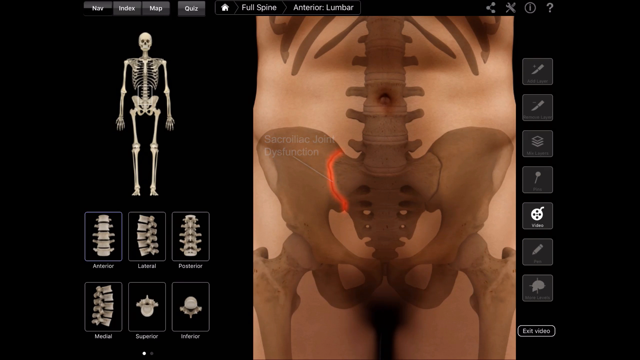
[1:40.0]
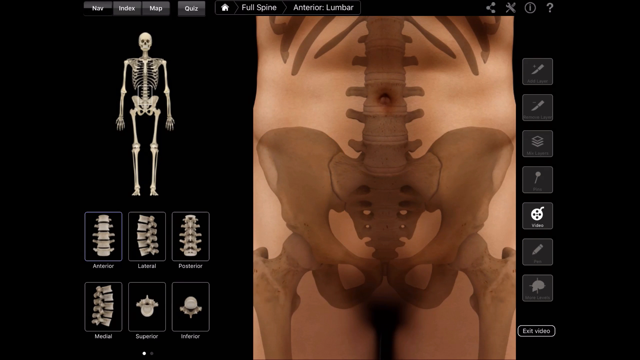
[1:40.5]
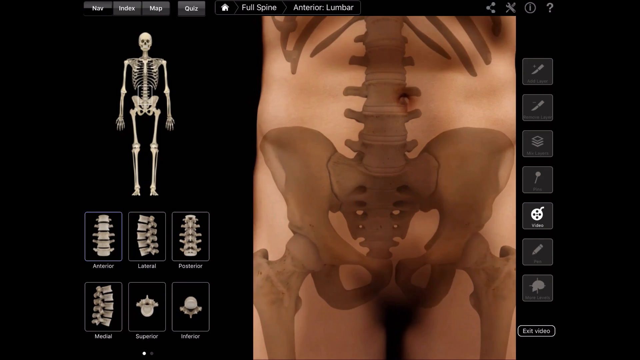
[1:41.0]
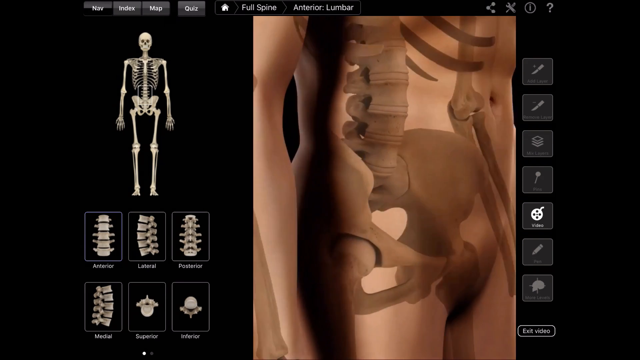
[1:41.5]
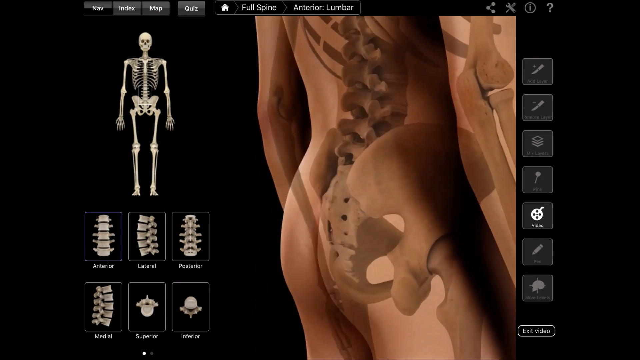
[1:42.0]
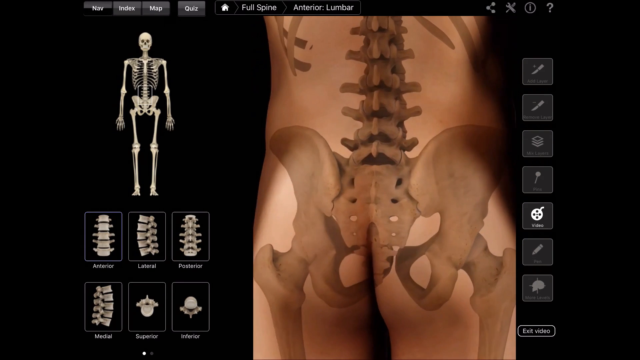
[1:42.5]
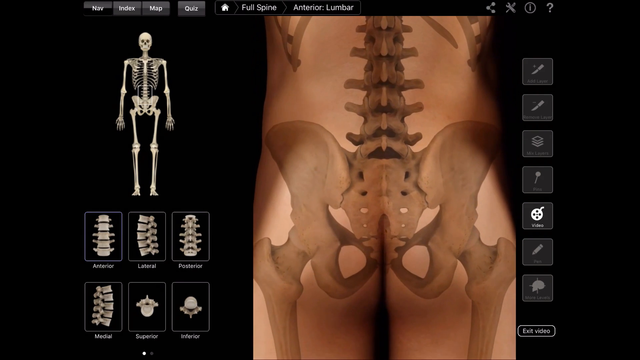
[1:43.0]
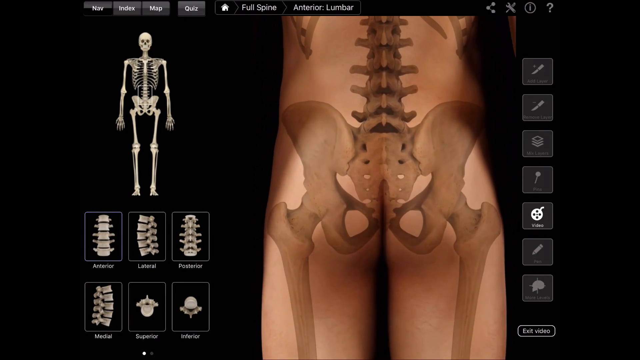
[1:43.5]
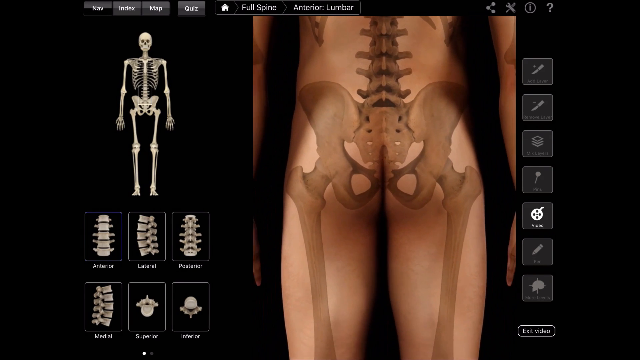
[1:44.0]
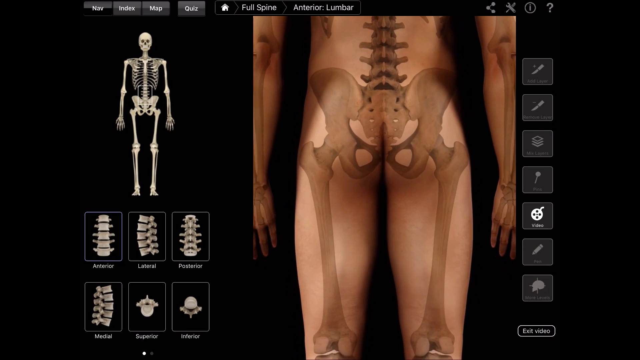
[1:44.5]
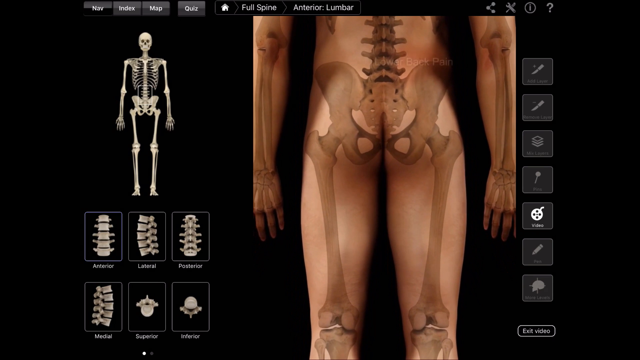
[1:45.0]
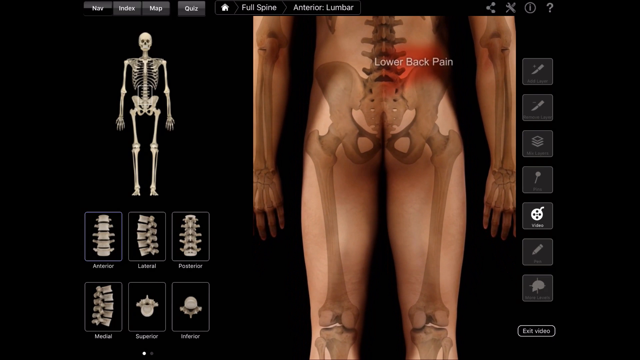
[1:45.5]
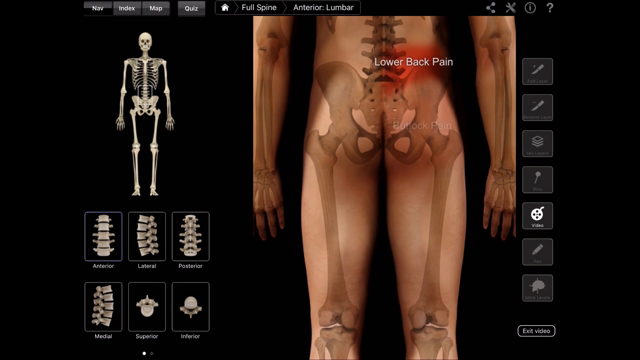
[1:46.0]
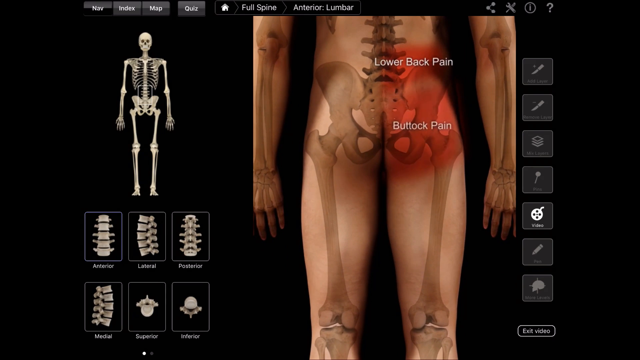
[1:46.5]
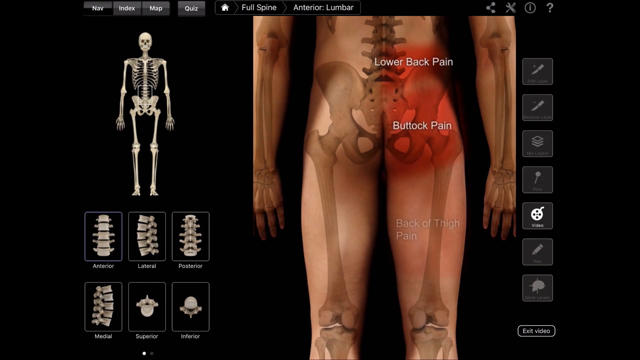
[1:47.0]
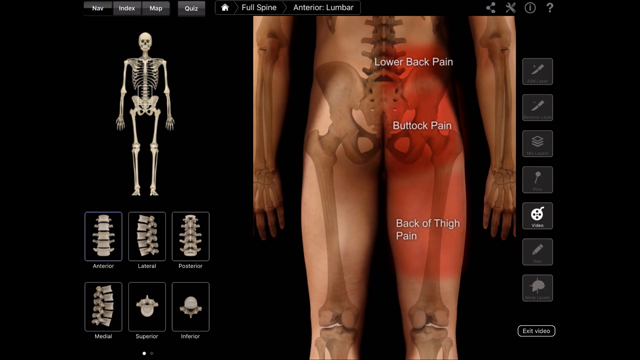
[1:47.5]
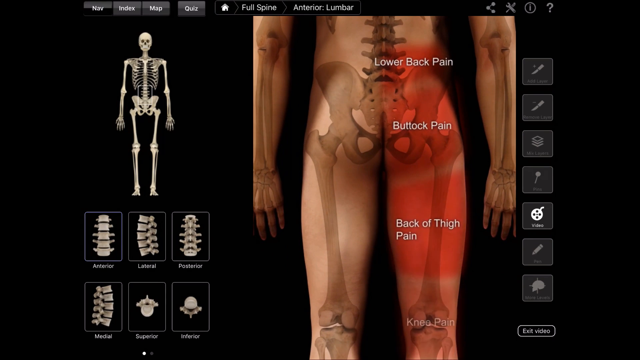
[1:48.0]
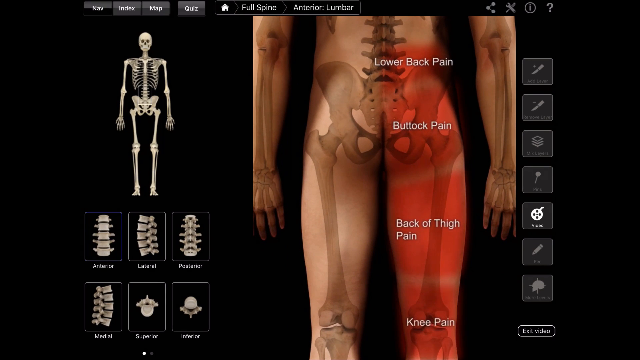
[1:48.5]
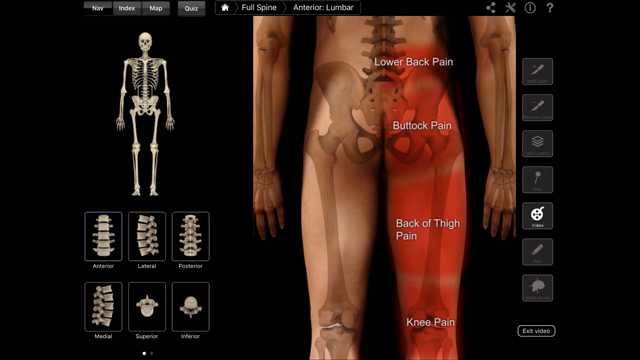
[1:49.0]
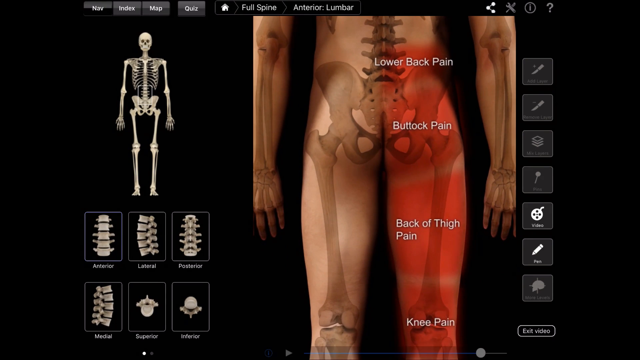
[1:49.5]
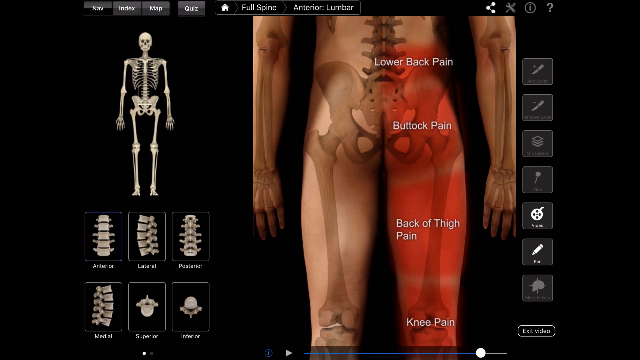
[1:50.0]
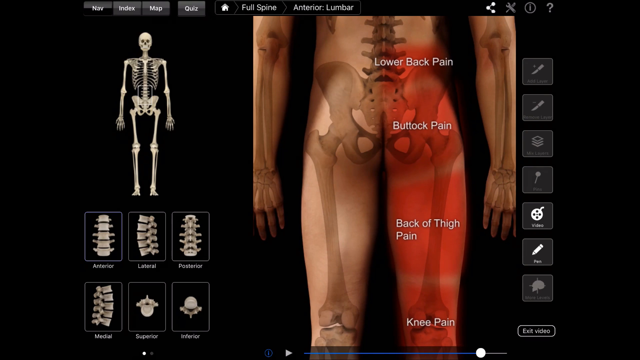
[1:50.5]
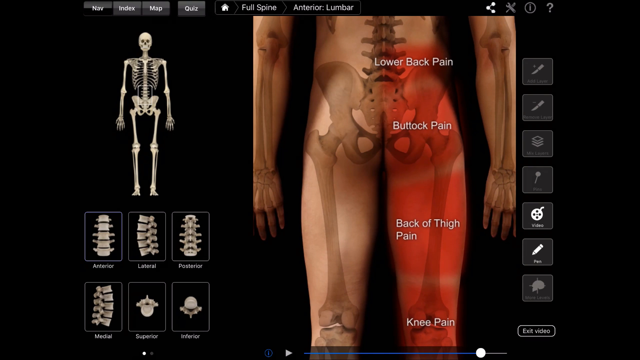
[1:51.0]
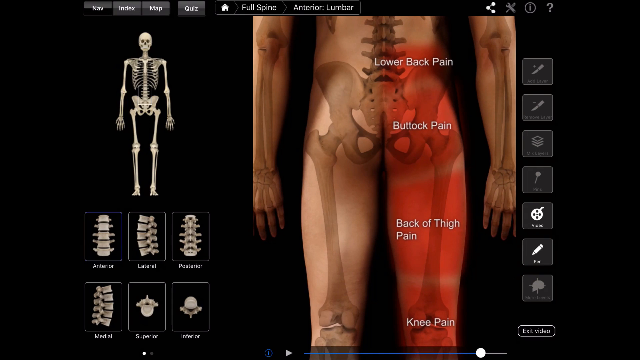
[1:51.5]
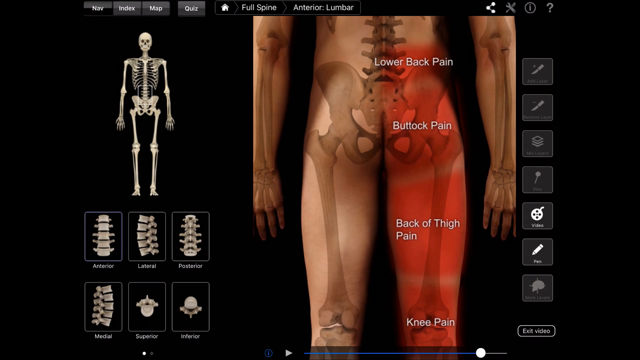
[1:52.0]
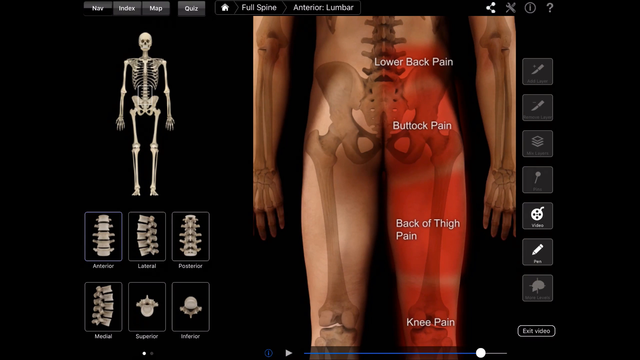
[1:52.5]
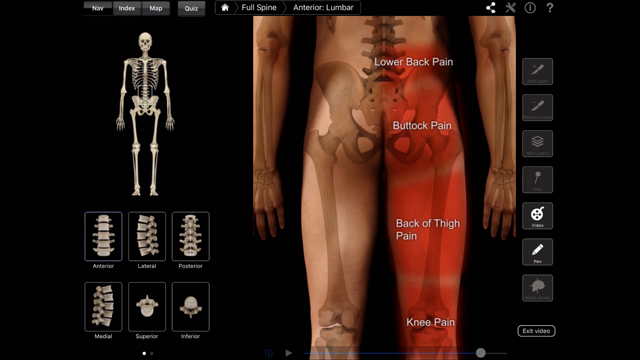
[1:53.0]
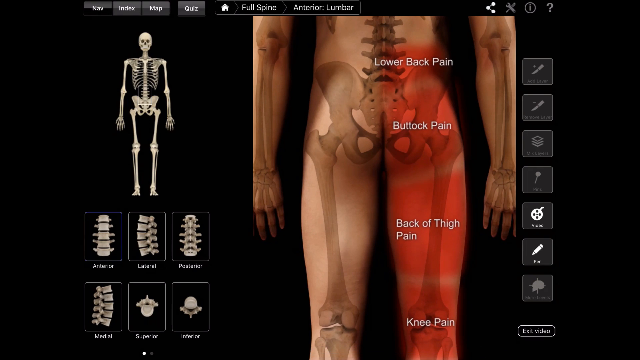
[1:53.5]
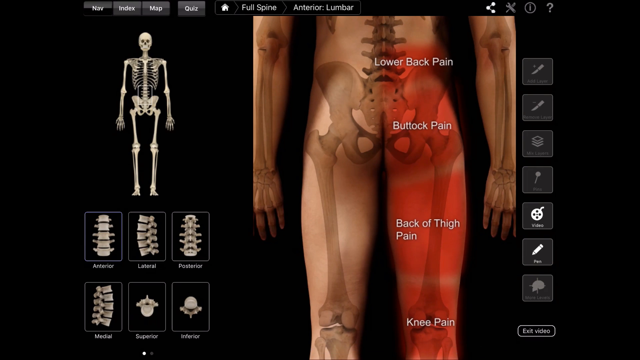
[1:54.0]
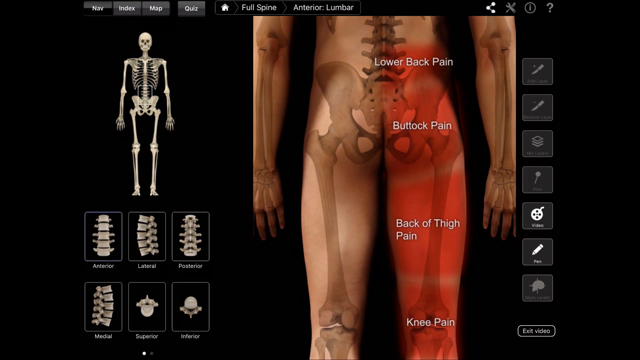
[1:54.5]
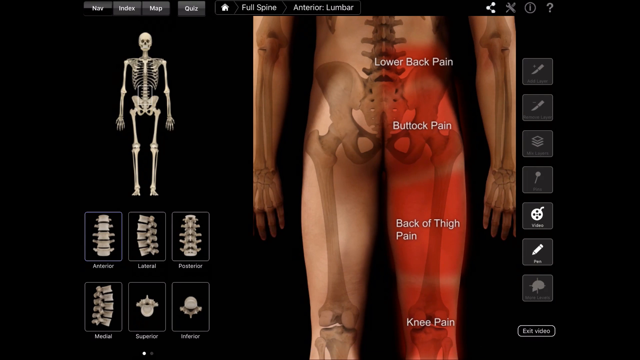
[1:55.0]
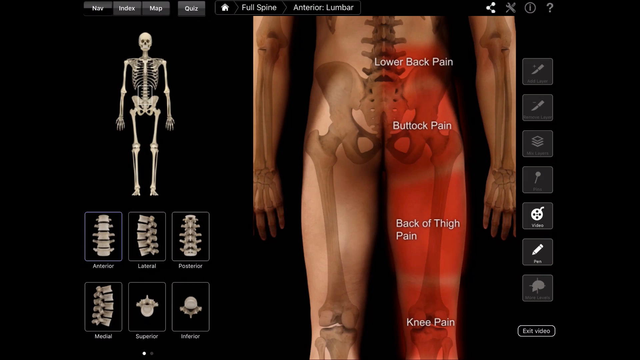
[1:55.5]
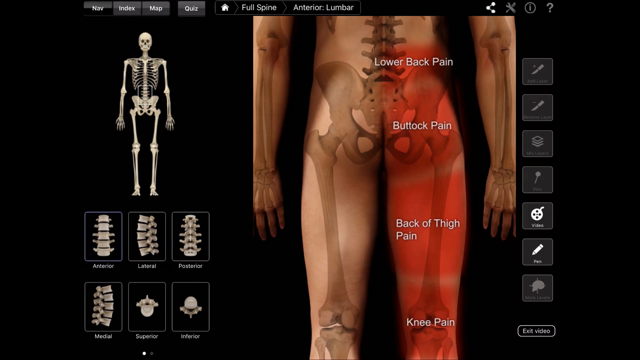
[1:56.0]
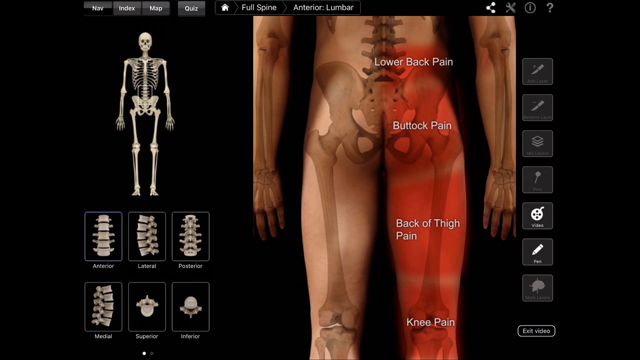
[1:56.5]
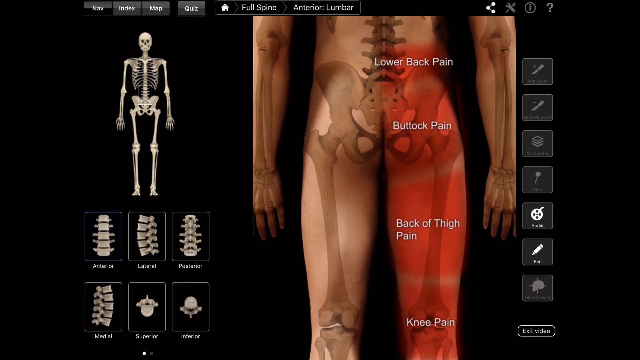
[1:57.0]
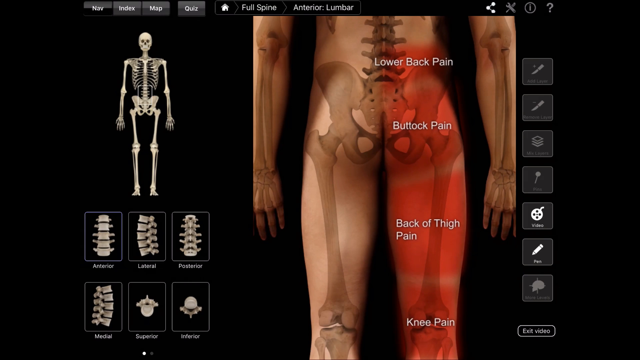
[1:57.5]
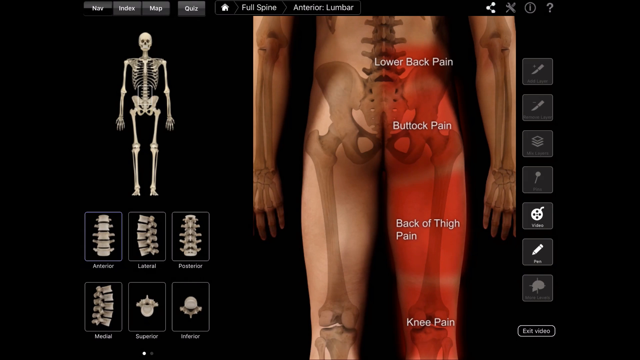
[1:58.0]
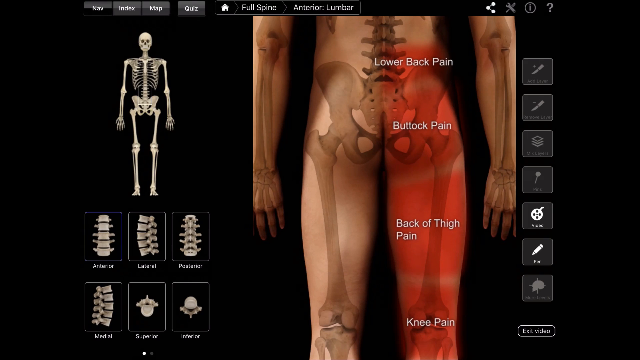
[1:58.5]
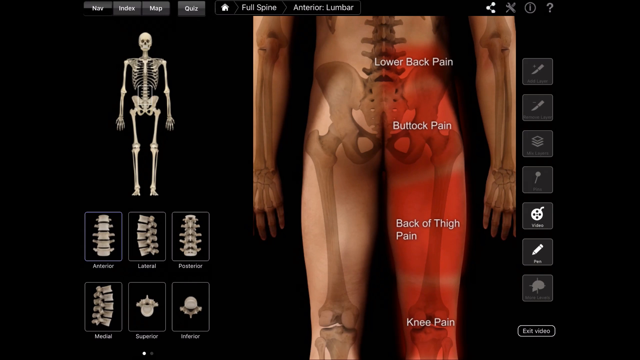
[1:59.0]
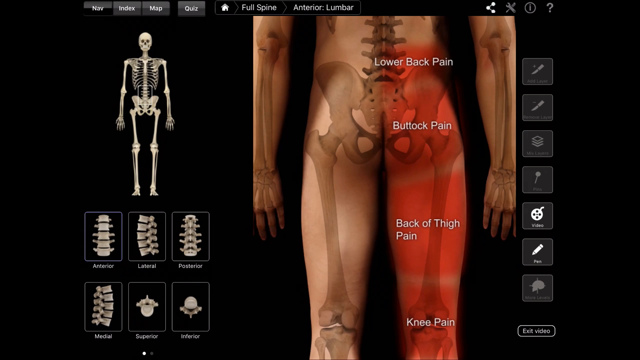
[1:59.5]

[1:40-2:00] The sacroiliac joint is highlighted in red to signify dysfunction. A skeleton is still shown, presented so that it looks like seeing past the skin into the skeleton. The body is turned around so the spine is seen from the back. The view zooms out, and the lower back and buttock are highlighted in red to signify pain, labeled "lower back pain" and "buttock pain." Back of thigh pain and knee pain are highlighted as well.